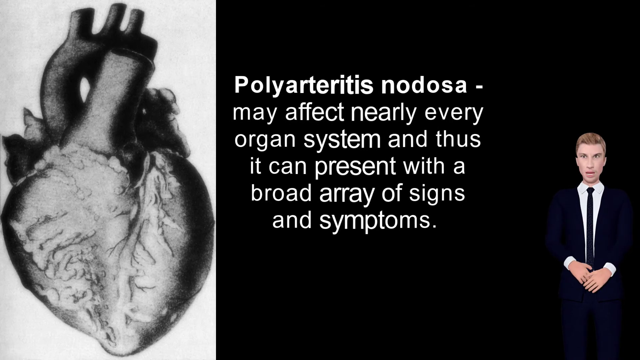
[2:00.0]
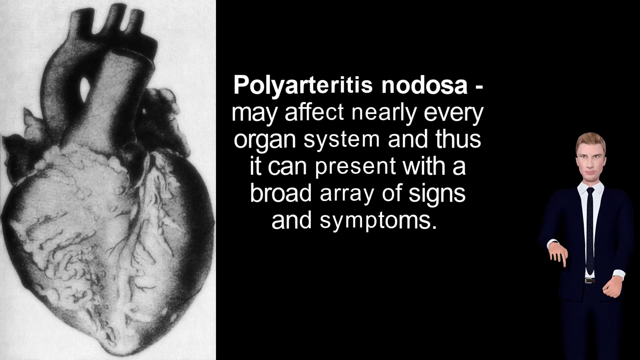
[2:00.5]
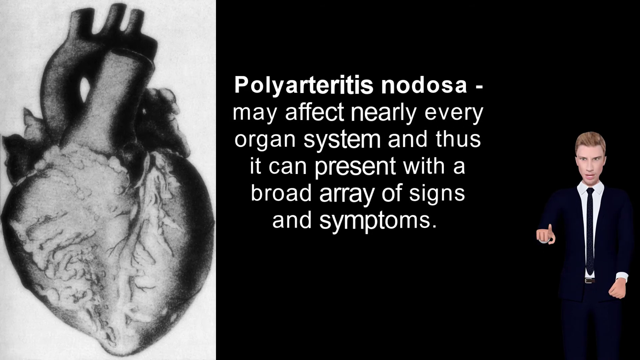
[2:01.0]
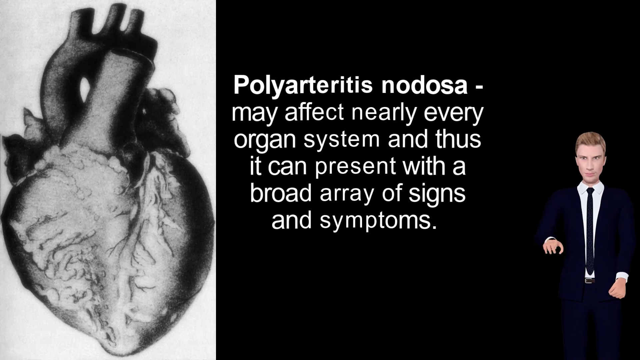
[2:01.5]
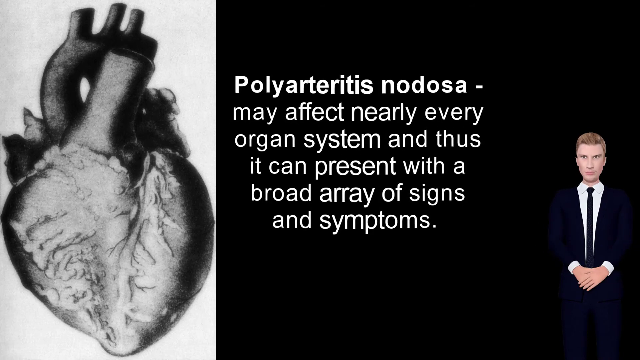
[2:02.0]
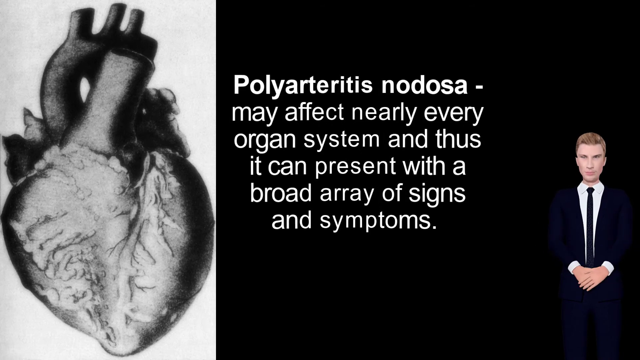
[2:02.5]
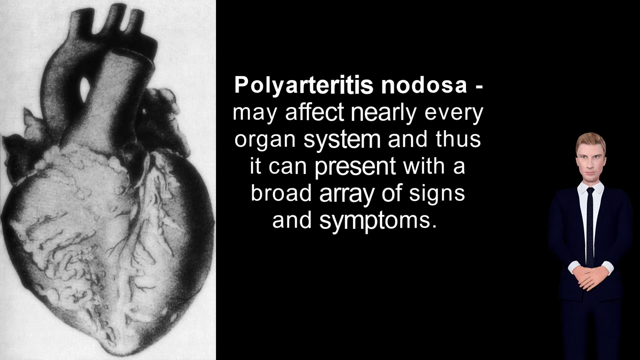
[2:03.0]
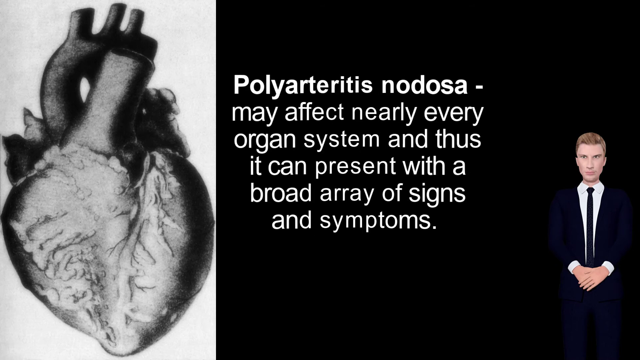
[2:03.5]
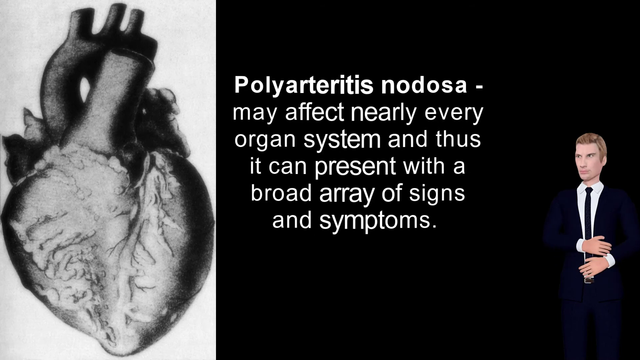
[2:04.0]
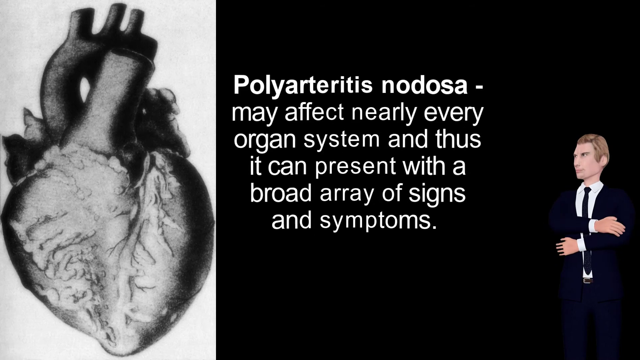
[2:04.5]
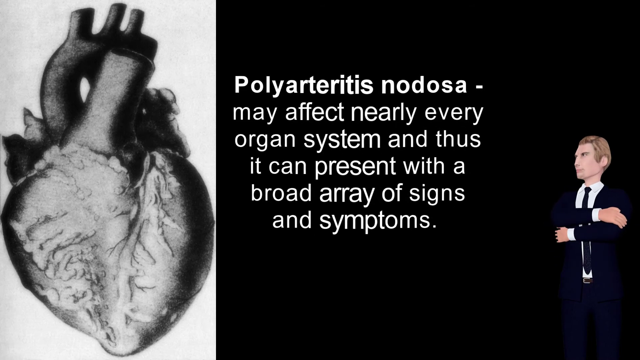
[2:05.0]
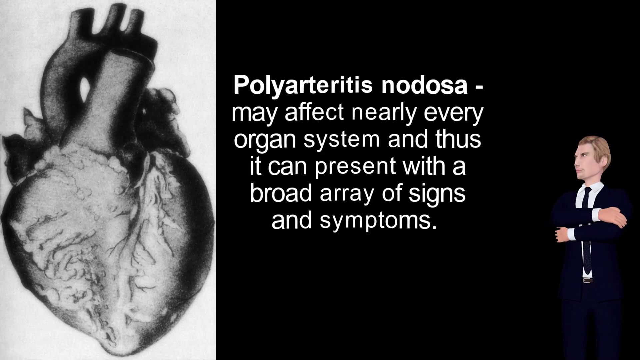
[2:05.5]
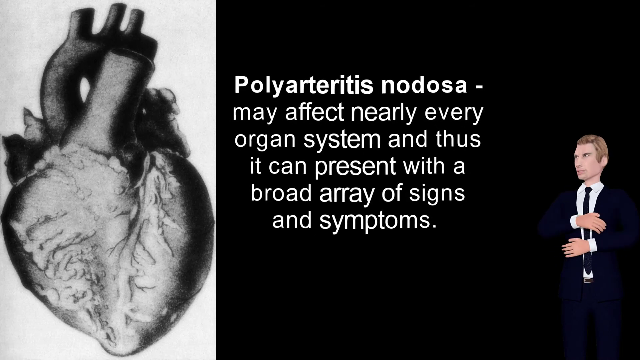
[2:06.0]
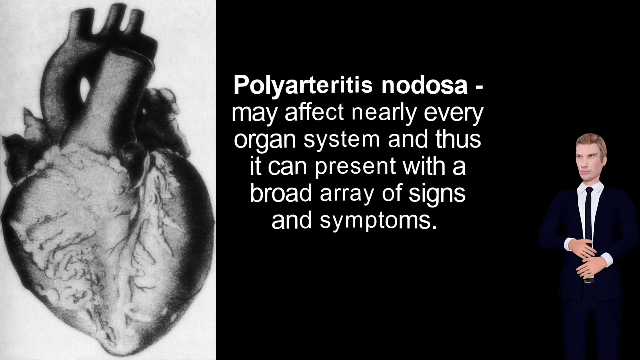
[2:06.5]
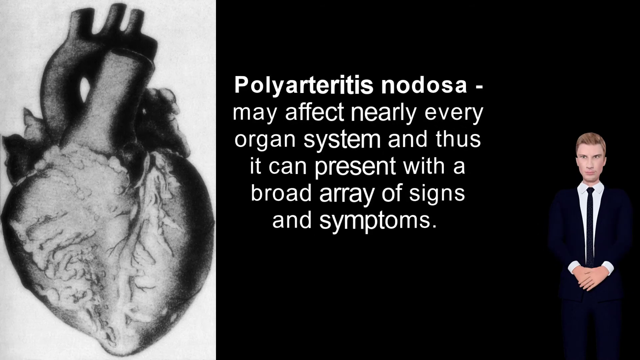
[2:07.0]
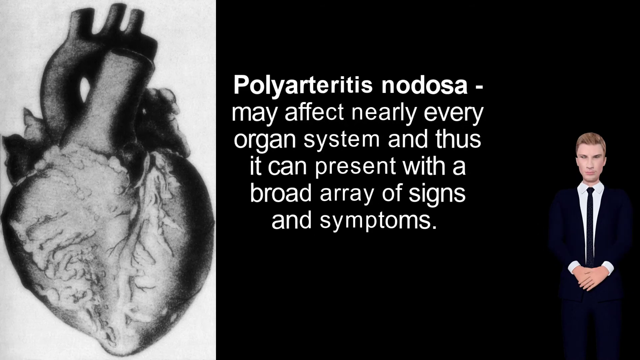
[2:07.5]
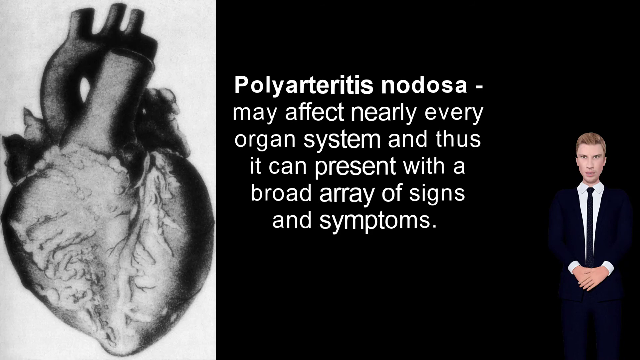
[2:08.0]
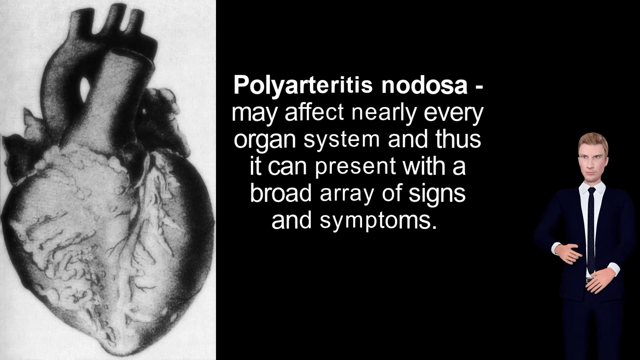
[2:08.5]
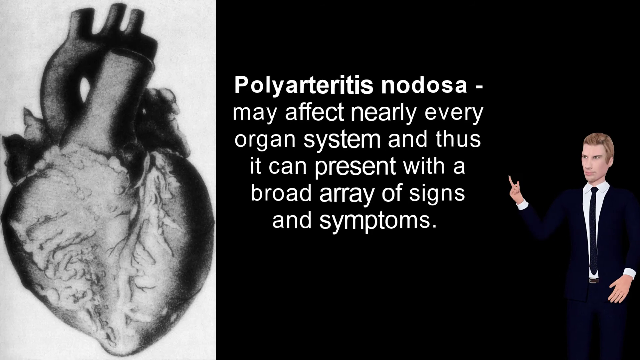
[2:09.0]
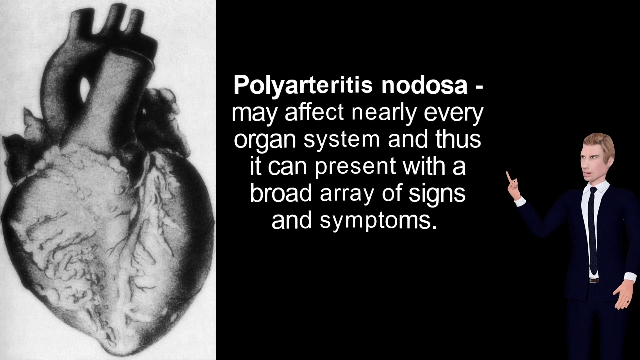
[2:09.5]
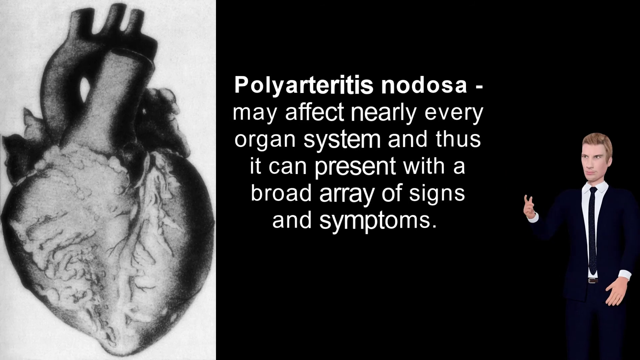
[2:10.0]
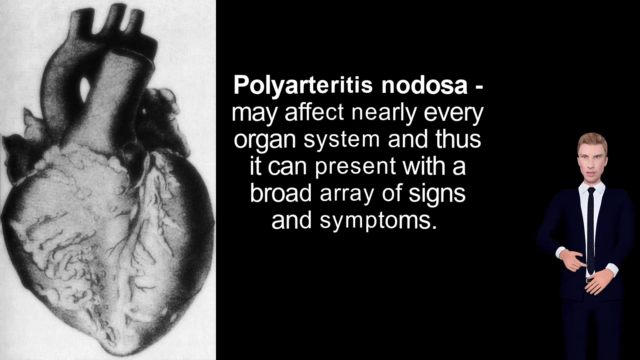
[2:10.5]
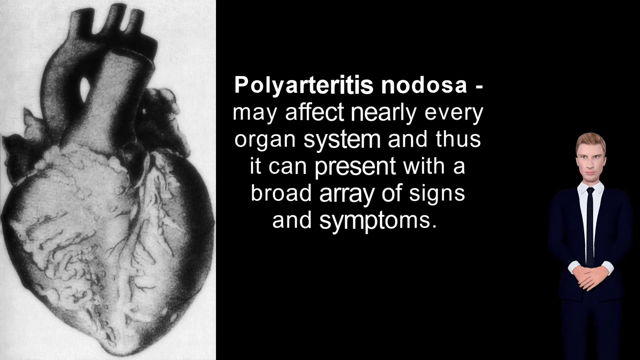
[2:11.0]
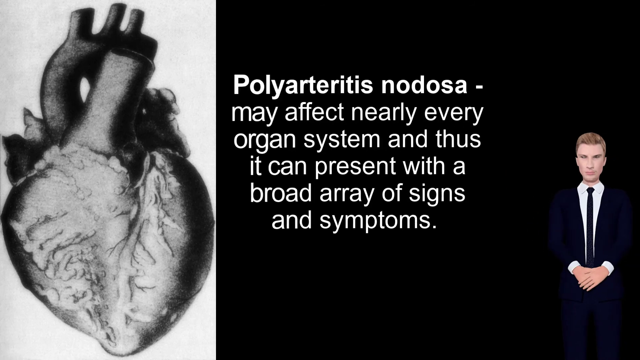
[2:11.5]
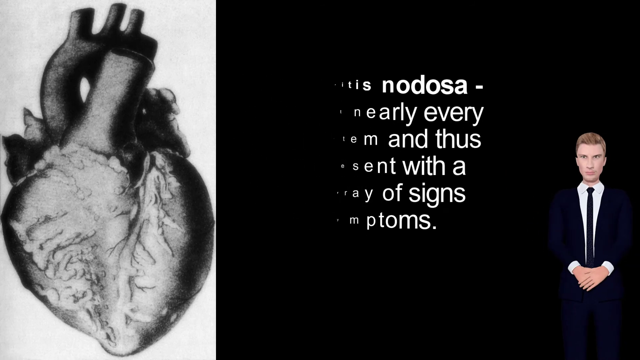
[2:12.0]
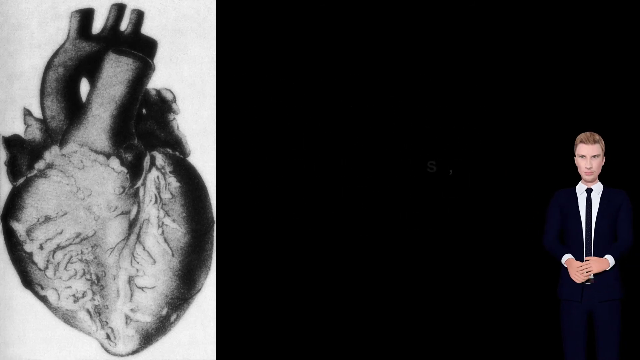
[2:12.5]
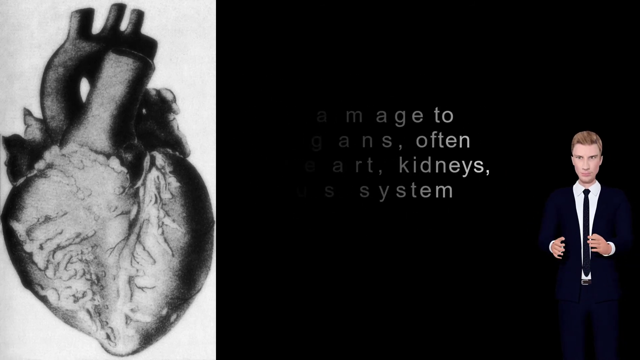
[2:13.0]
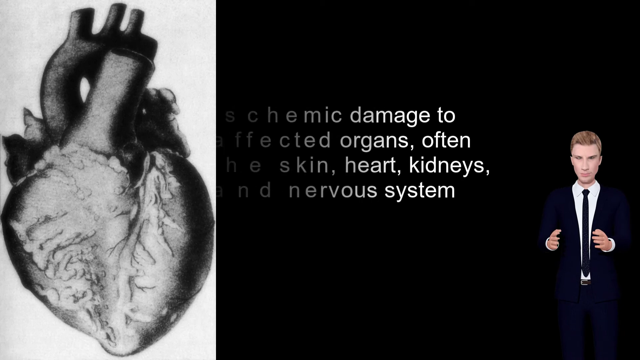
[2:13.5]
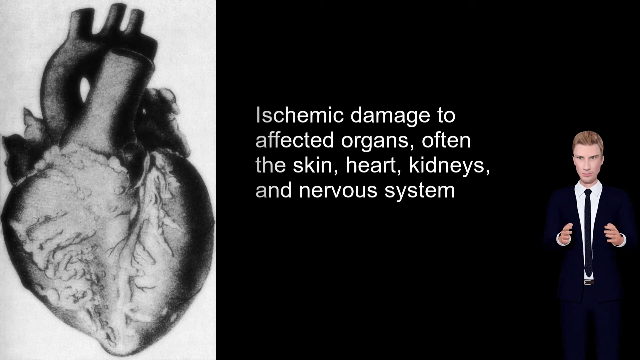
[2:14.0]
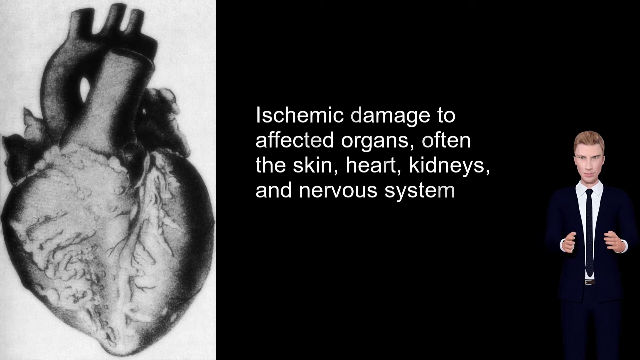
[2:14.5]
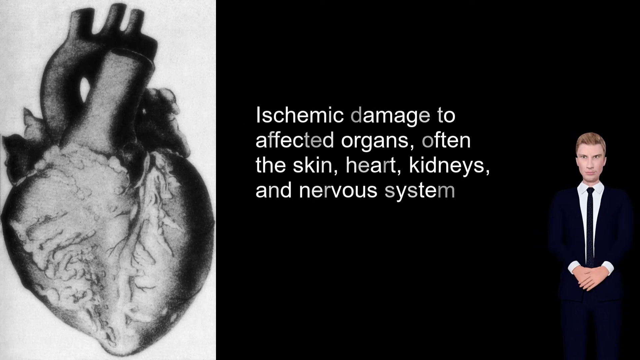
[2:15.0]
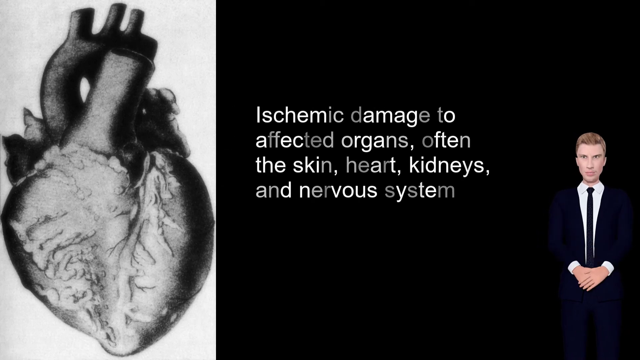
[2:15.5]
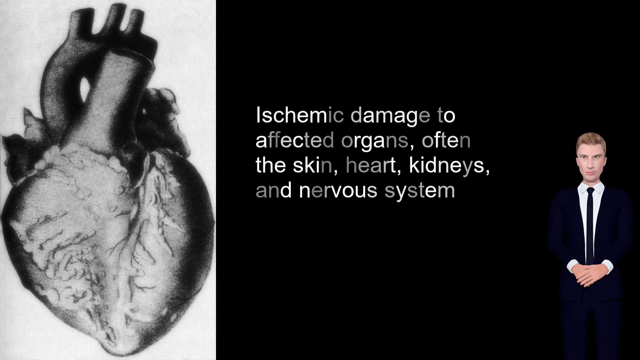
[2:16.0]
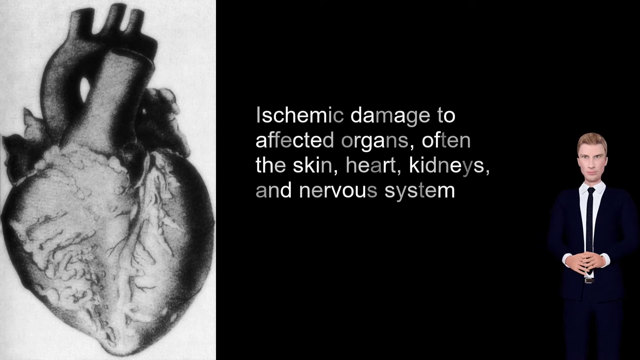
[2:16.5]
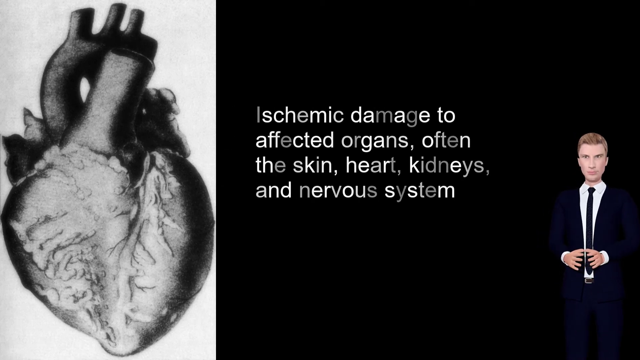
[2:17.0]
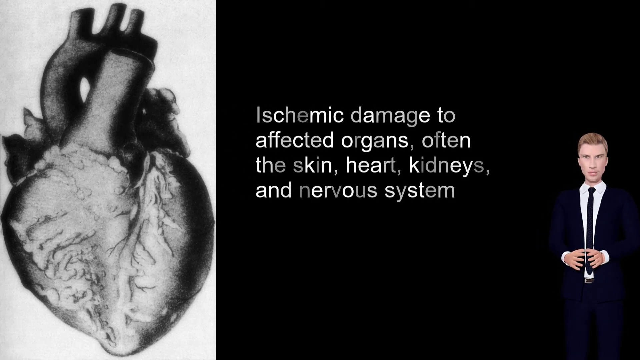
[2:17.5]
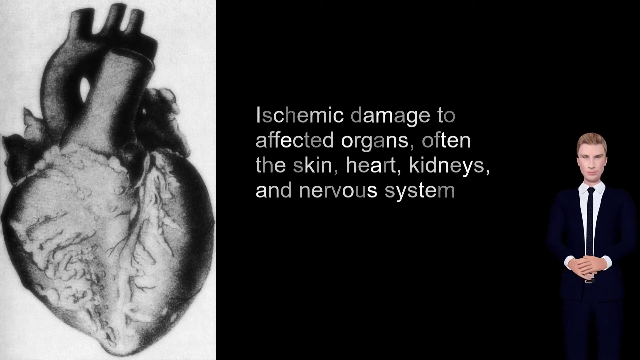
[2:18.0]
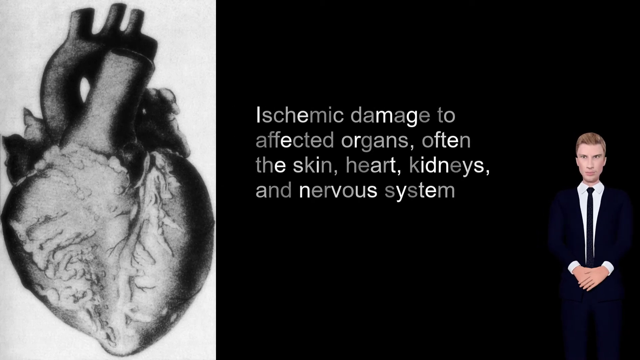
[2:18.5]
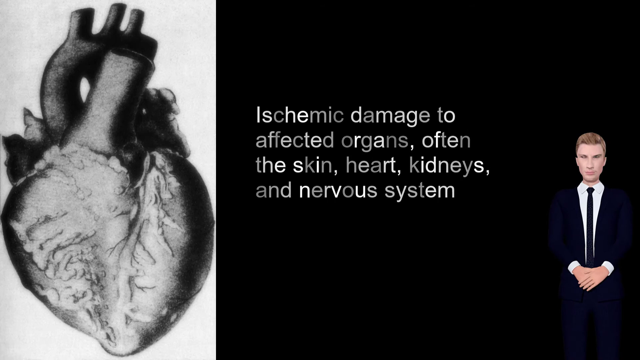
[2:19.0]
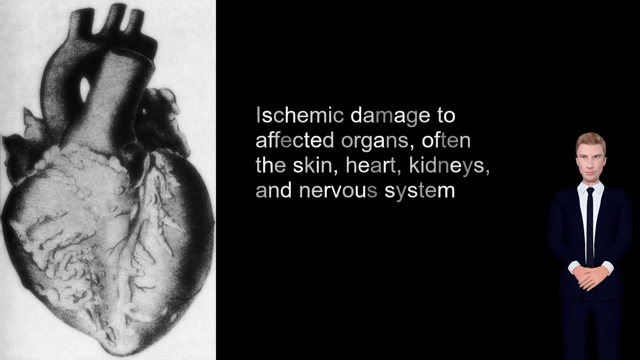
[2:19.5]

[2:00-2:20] Text states that the condition "may affect nearly every organ system, thus it can present with a broad array of signs and symptoms", and further text refers to damage to affected organs, often the skin, heart, kidneys, and nervous system. A diagram of a heart is on the left side of the screen, and on the right side is a black background with white text overlaid. A cartoon-style, 3D animated figure is in the bottom right corner.